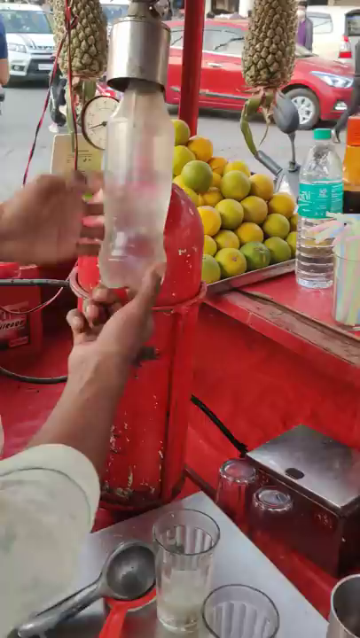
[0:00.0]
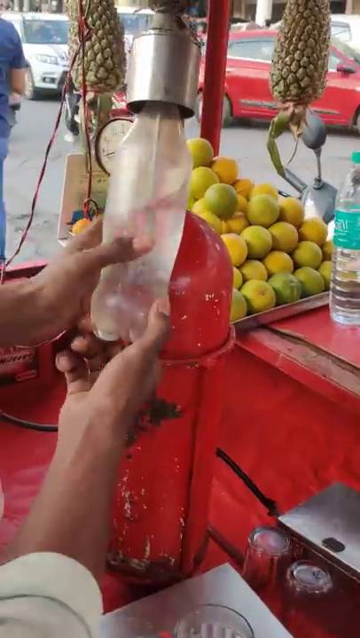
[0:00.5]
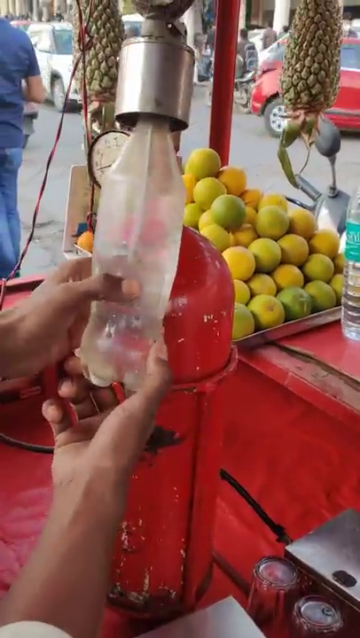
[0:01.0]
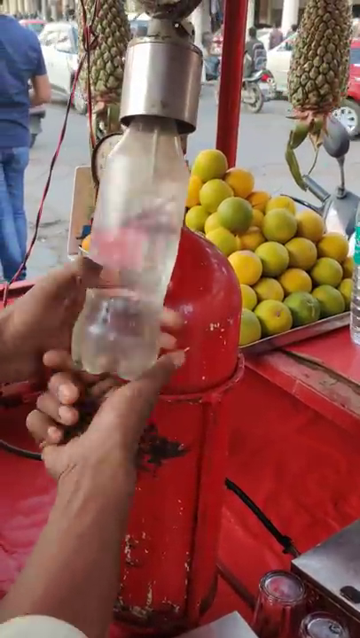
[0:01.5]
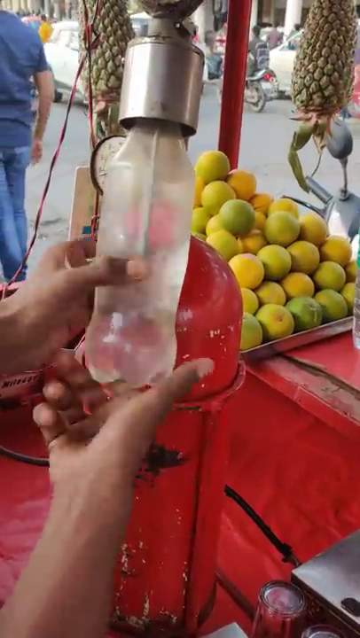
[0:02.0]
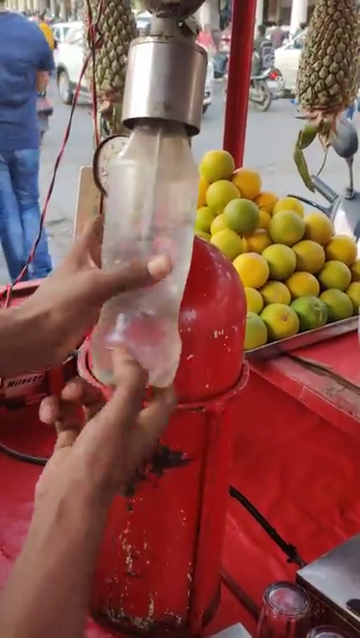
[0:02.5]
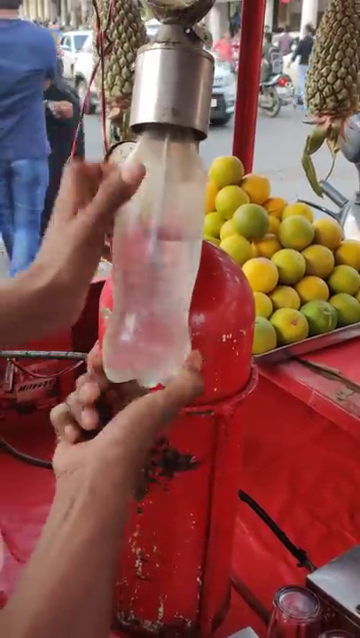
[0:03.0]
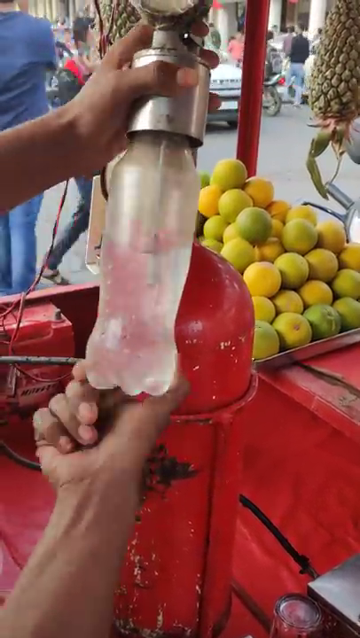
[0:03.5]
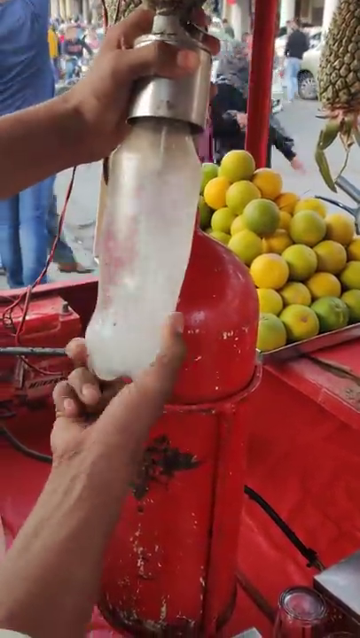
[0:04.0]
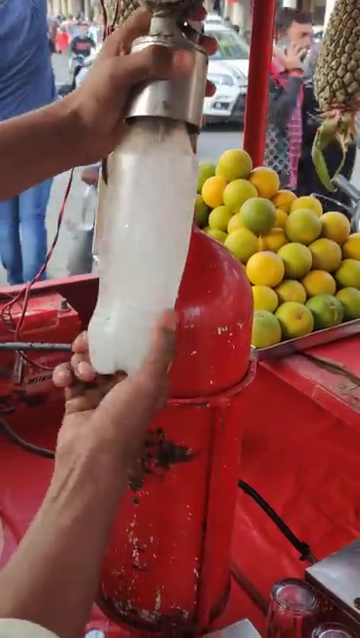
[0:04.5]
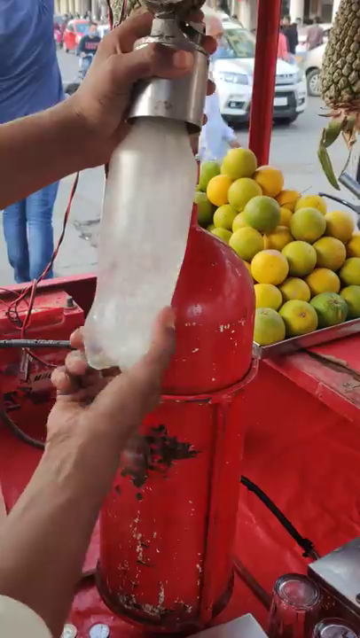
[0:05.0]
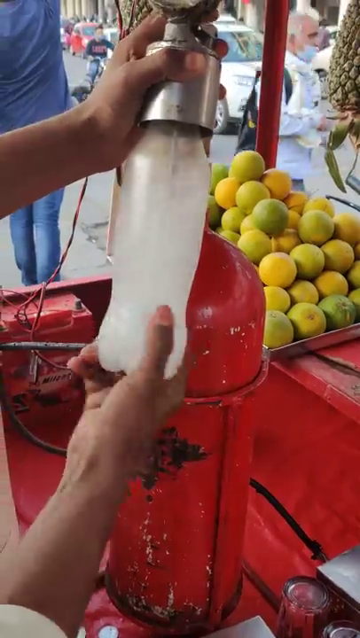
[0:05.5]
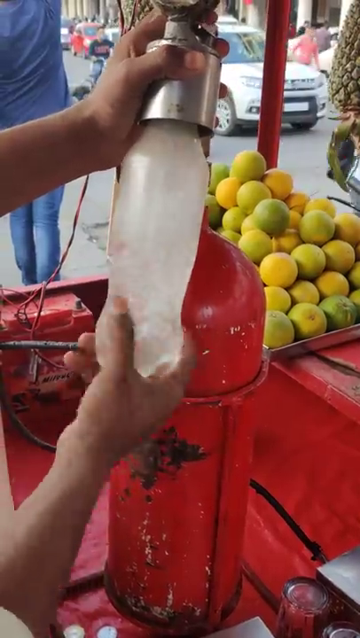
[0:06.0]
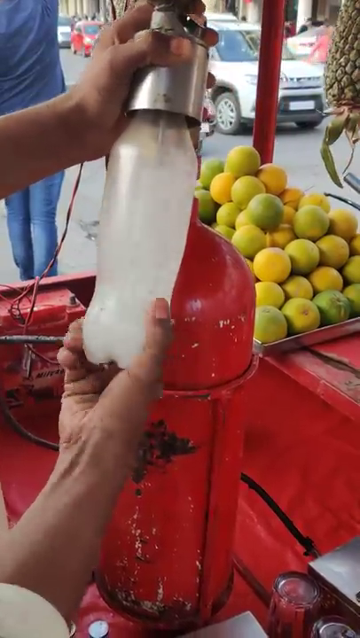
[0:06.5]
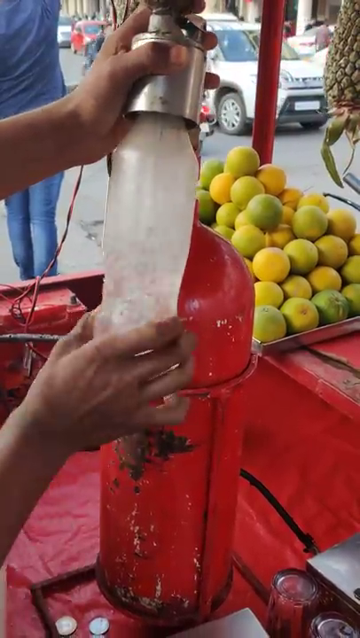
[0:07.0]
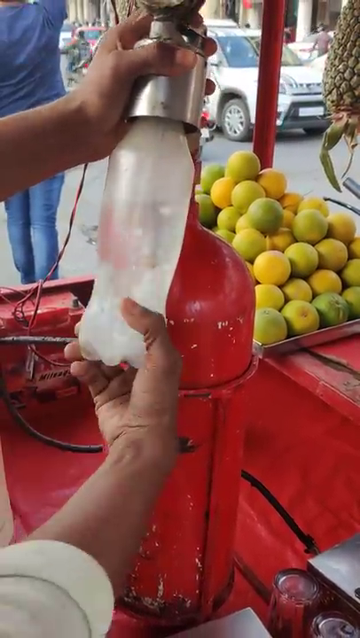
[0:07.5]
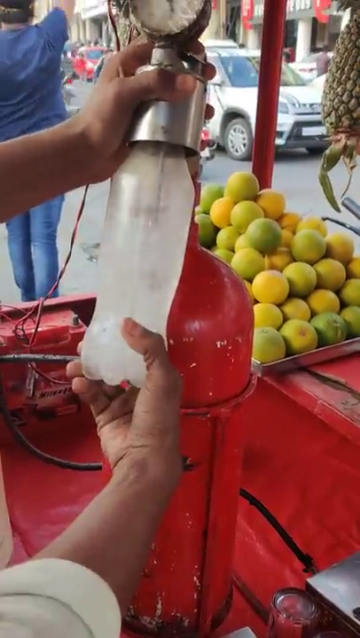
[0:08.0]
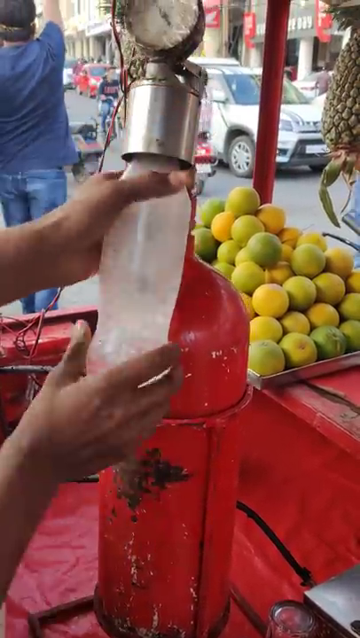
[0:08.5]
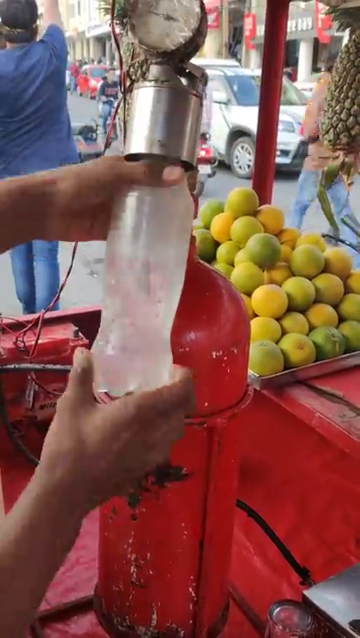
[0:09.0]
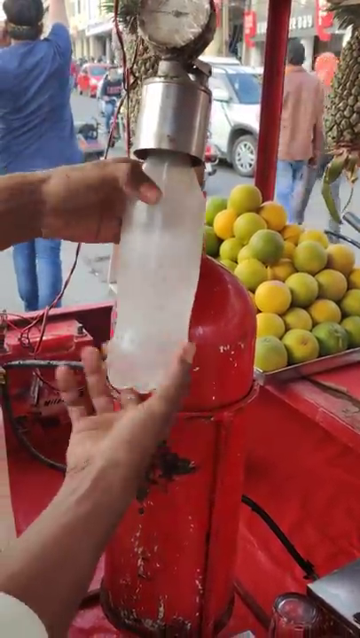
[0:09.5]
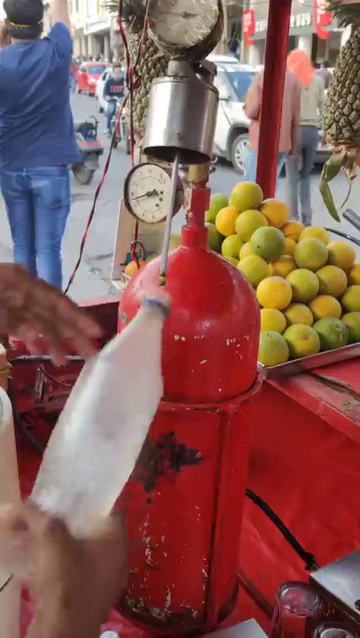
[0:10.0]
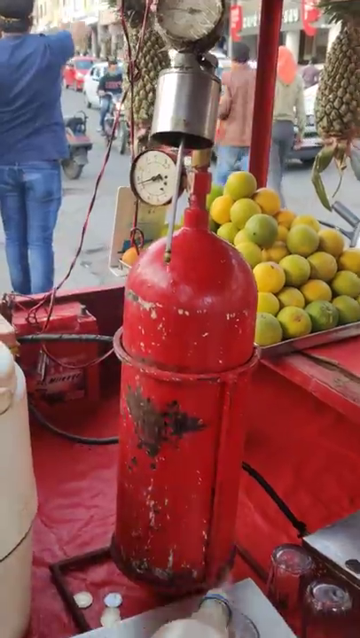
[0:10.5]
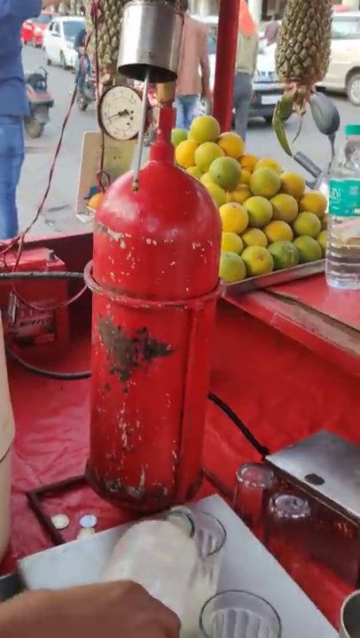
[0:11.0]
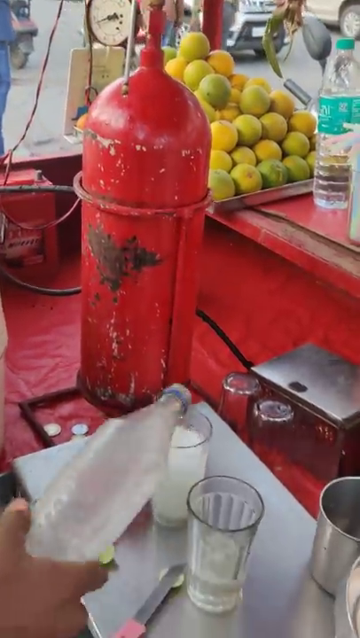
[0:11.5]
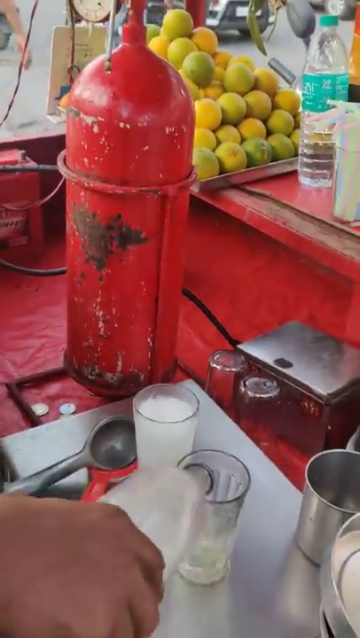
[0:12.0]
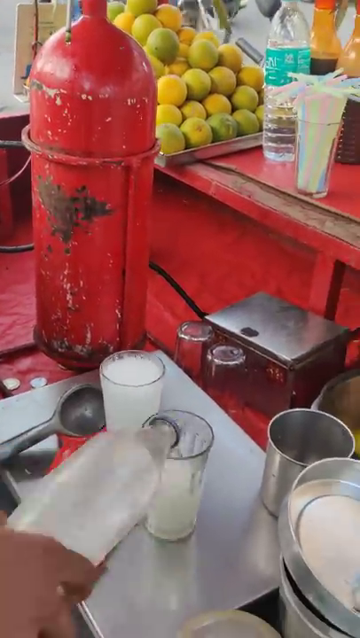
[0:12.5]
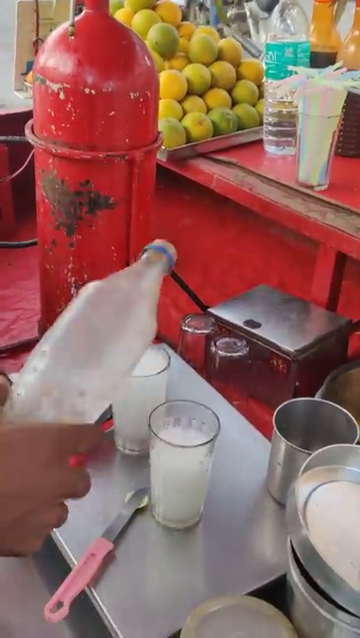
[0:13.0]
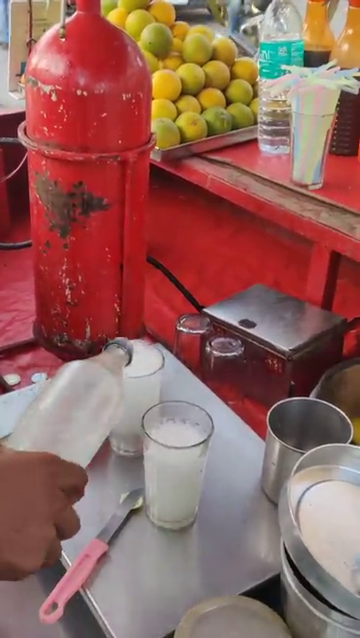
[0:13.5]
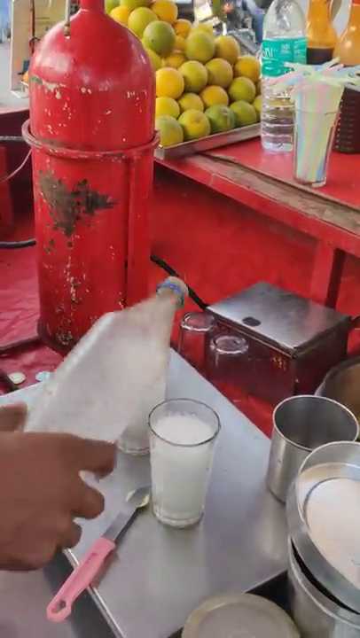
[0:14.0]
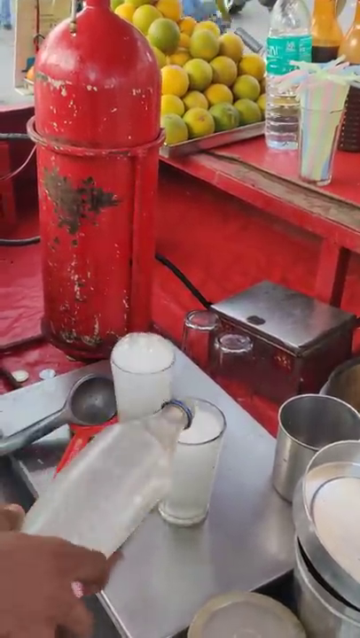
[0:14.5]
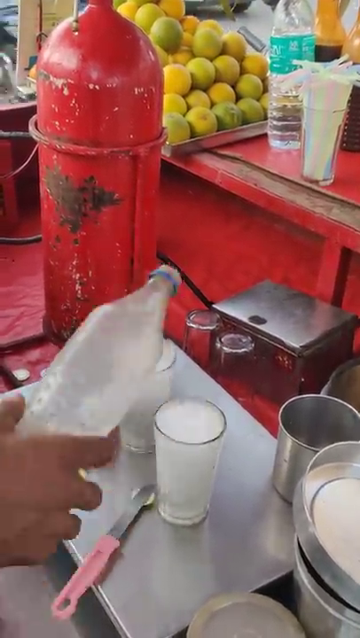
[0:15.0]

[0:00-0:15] Someone appears to be manipulating some kind of glass or plastic bottle of soda, using their hands to rotate and turn it around while it is up in a silver spout, with some kind of straw in it. As he keeps rotating it, a hose and a small nozzle are visible in the middle, and the liquid inside is bubbling, maybe carbonated water. There is some kind of pressure valve at the top of the spout, and the whole thing is like some kind of red tank, sort of a helium tank. He then pours the carbonated water into a couple of cups, and different utensils are visible. Behind him, what look like lemons and mangoes, some yellowish round fruit, are piled up in a pyramid on some kind of cookie sheet, and there is also a water bottle. The setting seems to be outdoors at some kind of bazaar: behind it there is a road with traffic flowing, including cars and a motorcycle. Cut off at the left edge is a man in a short-sleeved blue shirt and blue denim jeans. The bottle is moved back and forth.